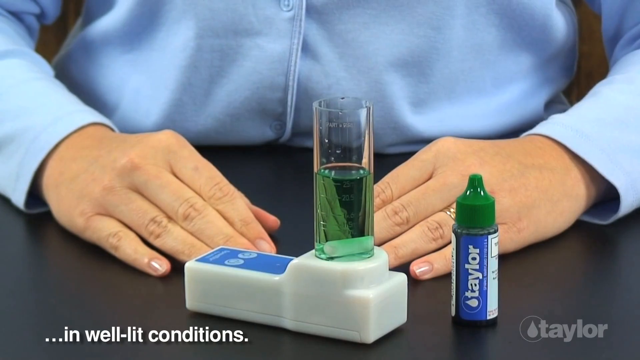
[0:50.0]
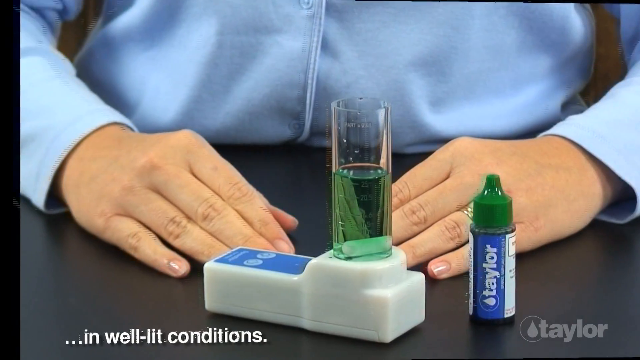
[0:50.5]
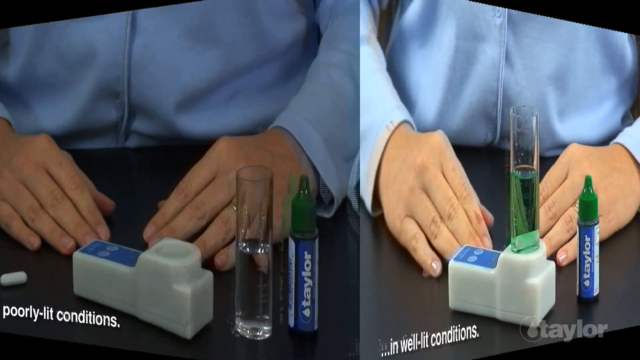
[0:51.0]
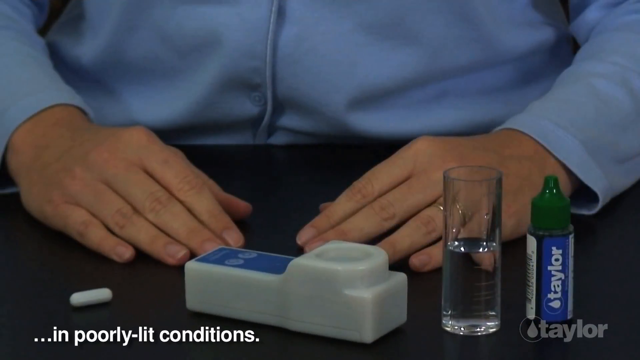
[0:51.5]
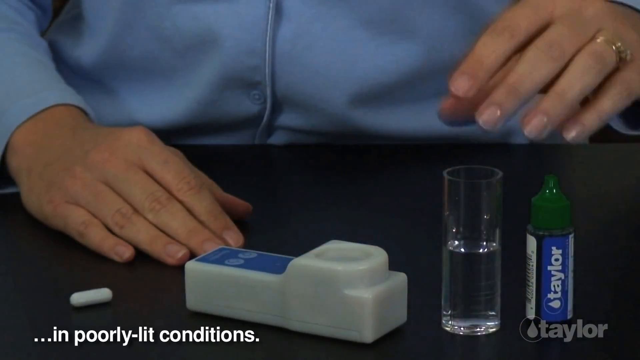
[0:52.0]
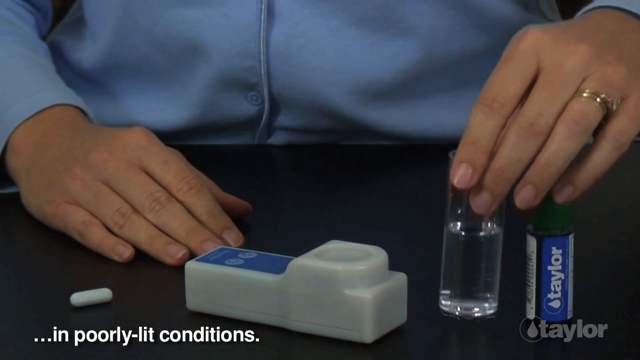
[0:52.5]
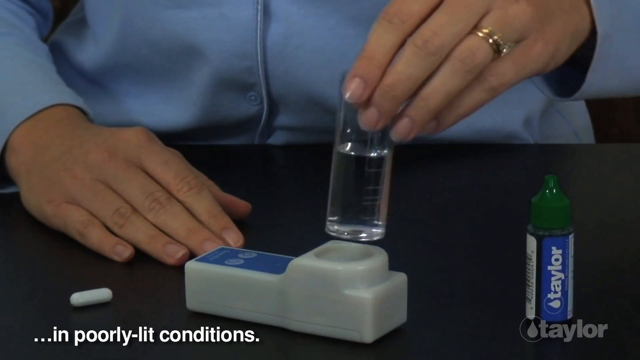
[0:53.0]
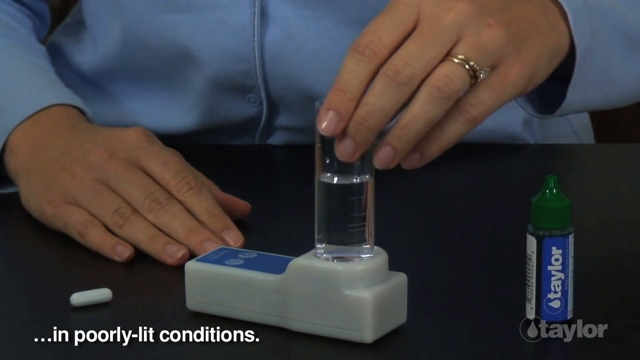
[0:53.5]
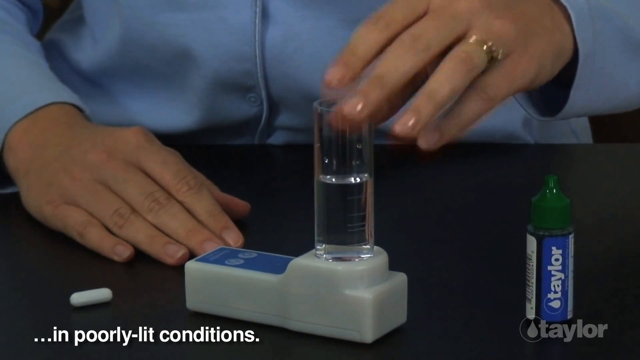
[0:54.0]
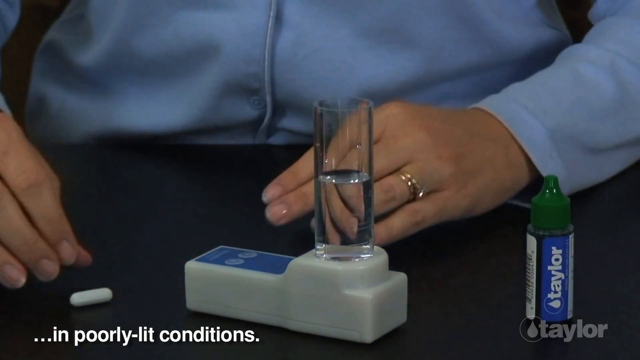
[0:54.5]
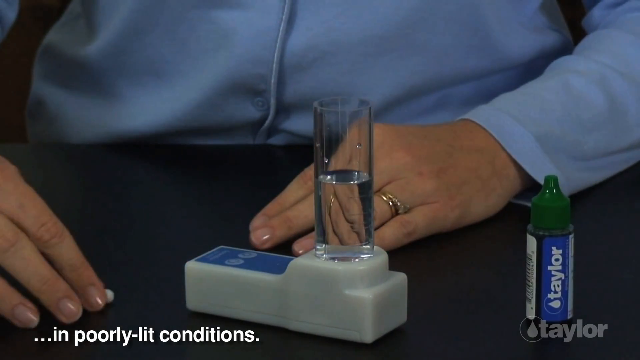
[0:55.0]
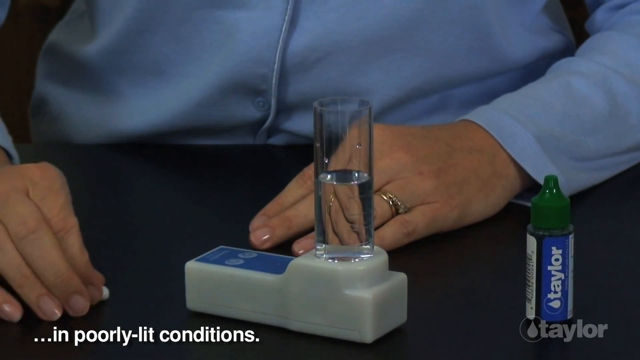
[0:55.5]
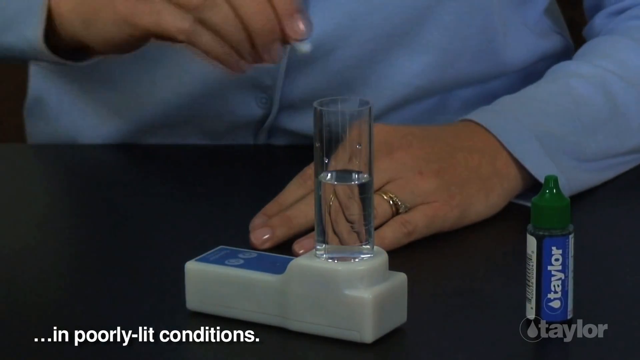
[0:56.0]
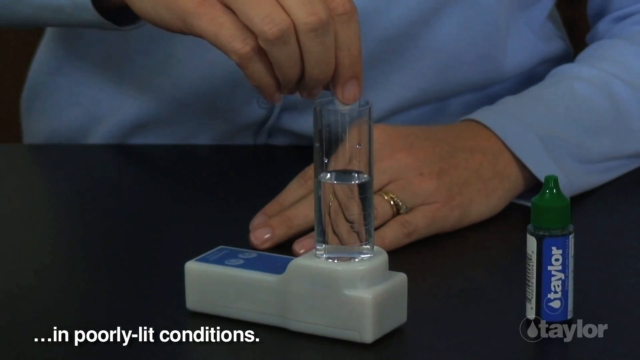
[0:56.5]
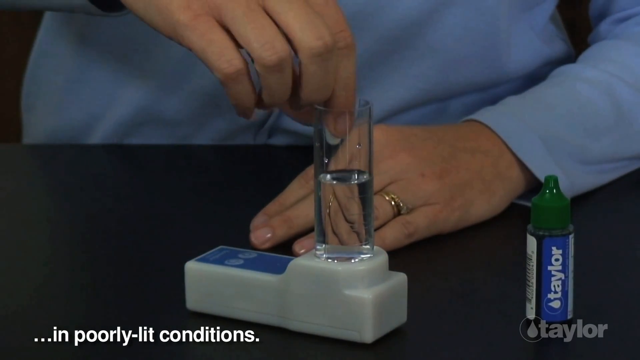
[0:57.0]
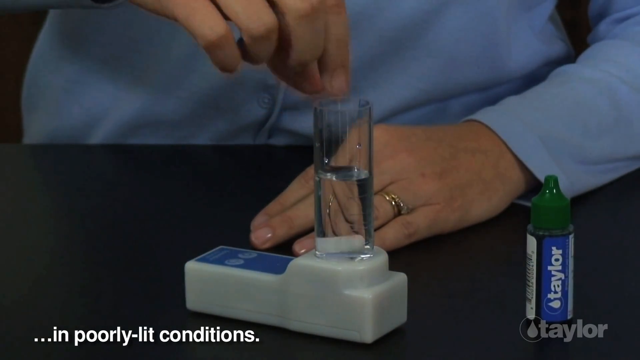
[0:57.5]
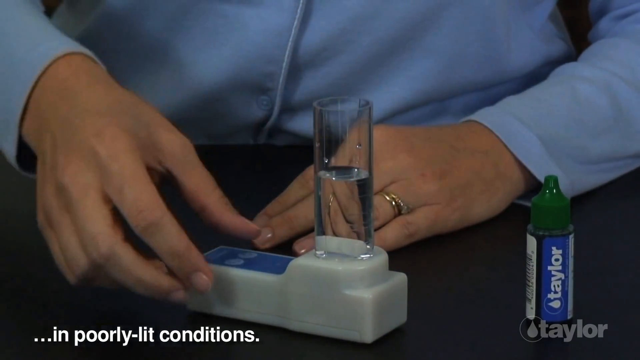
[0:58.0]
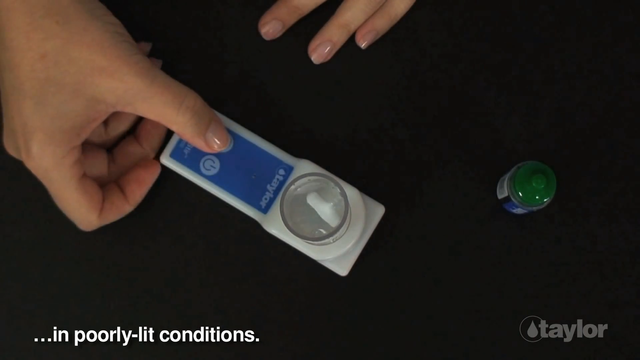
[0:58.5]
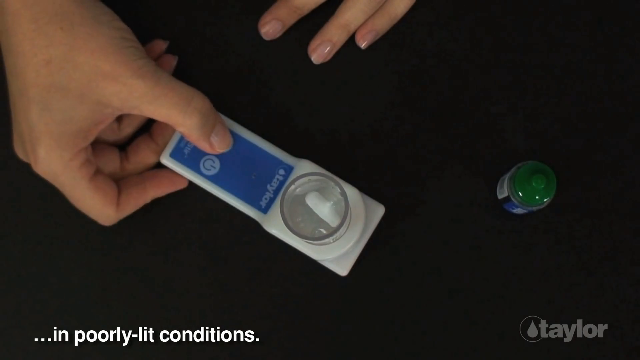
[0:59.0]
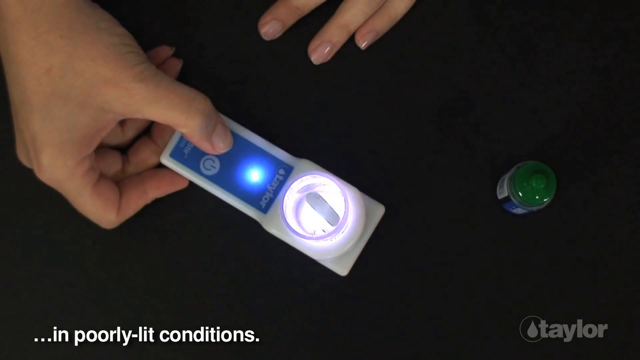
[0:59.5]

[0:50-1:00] The graphic rotates to the right to a new one, in which the Speedstir contraption appears to be used again. He takes the canister of clear liquid from the table, puts it onto the contraption, puts the tablet in and presses the button. An aerial view shows him pressing the button, and the light goes on. The pill starts to rotate; nothing green has been added yet, and the pill is stirring in the white liquid. When it is turned on, the light illuminates on the blue part, looking like a blue light showing the power is on. The bottle labeled "taylor" with the green cap is sitting on the table.